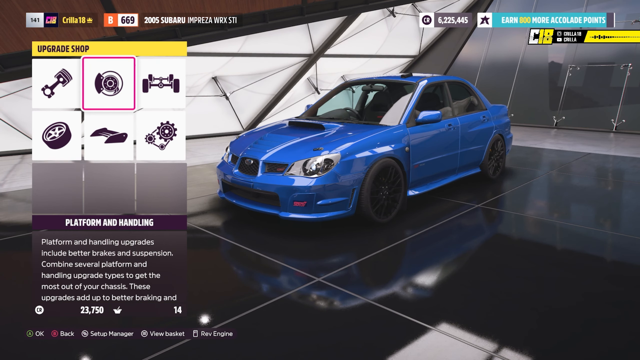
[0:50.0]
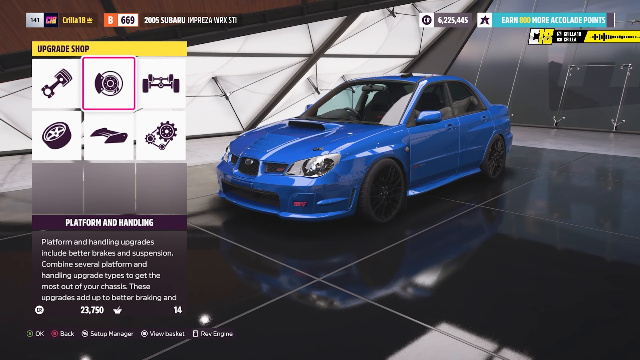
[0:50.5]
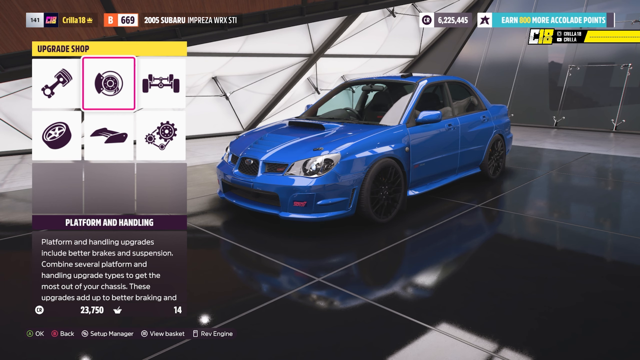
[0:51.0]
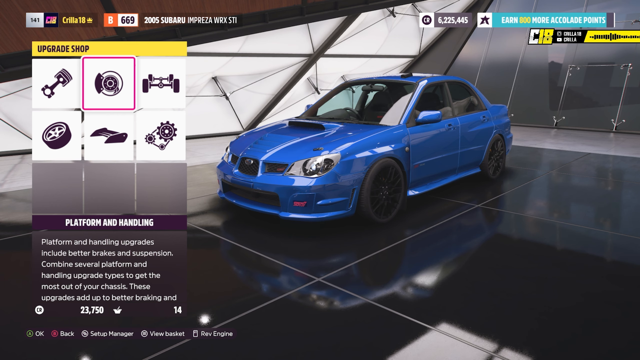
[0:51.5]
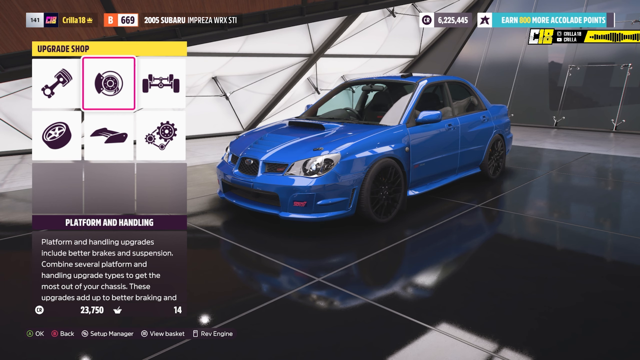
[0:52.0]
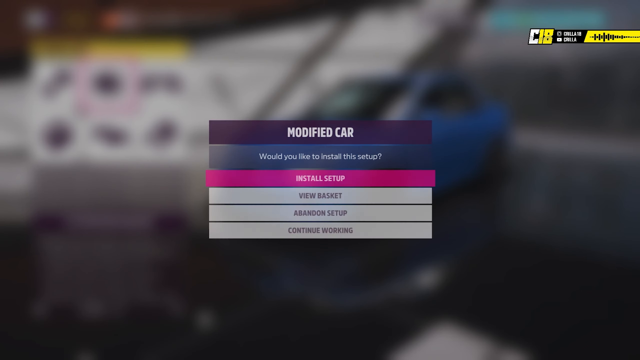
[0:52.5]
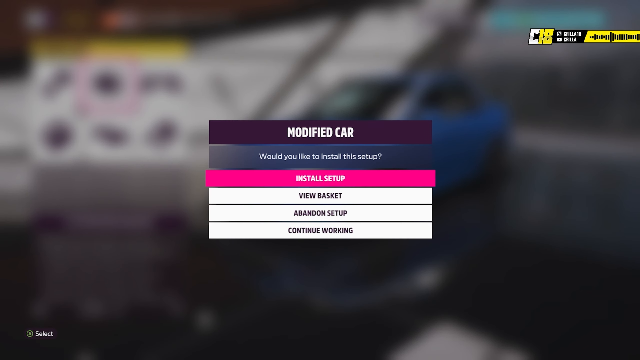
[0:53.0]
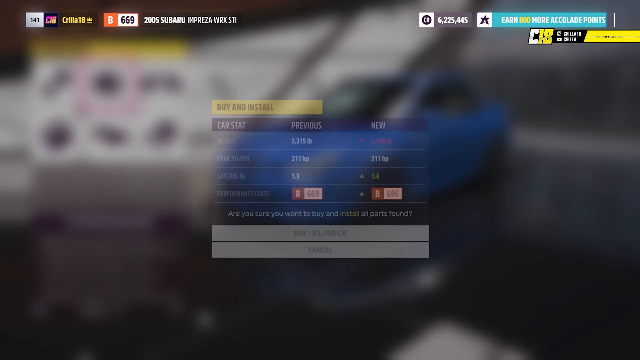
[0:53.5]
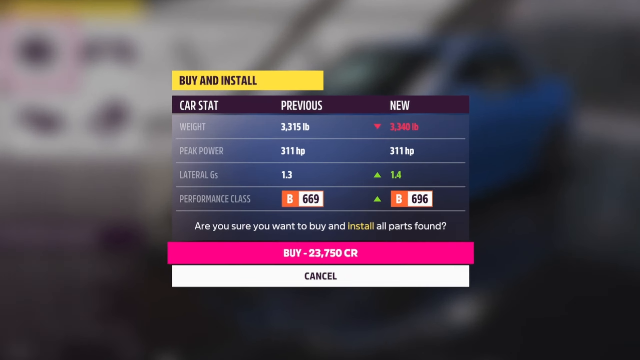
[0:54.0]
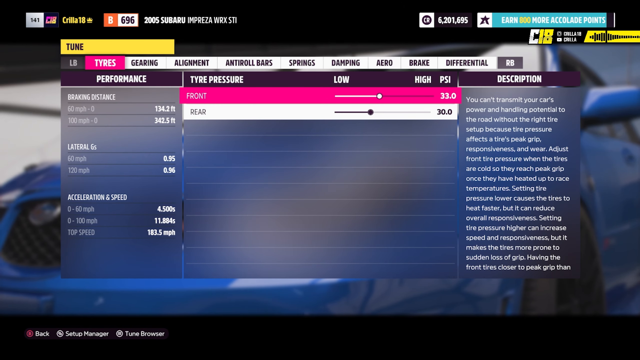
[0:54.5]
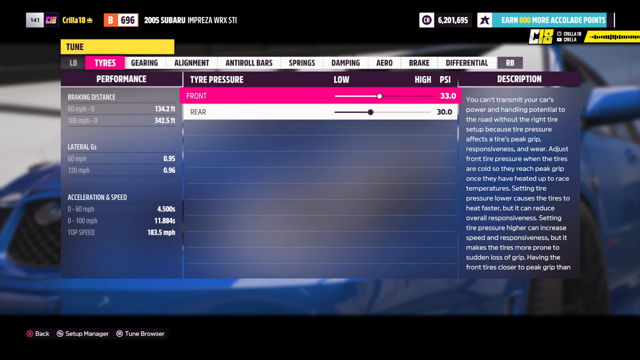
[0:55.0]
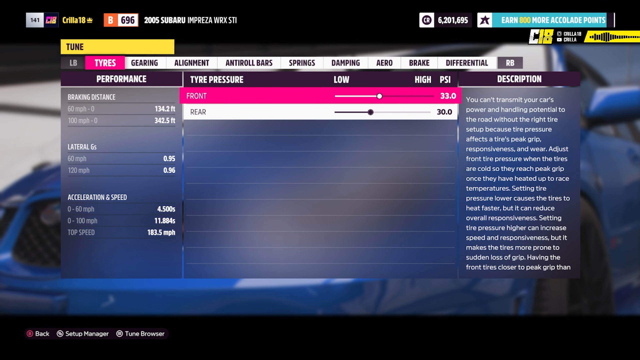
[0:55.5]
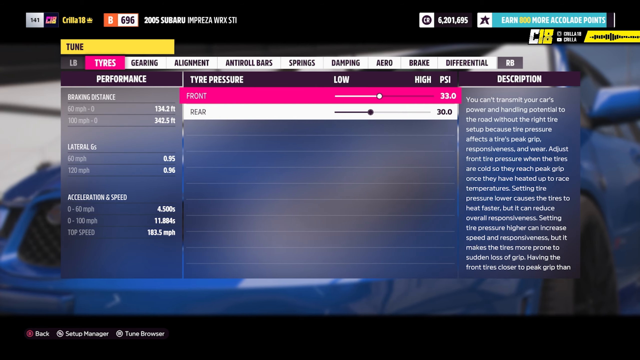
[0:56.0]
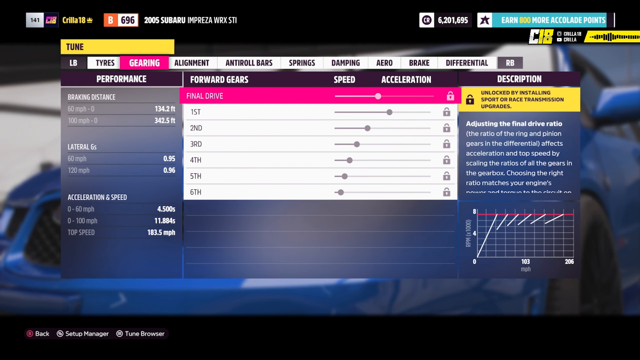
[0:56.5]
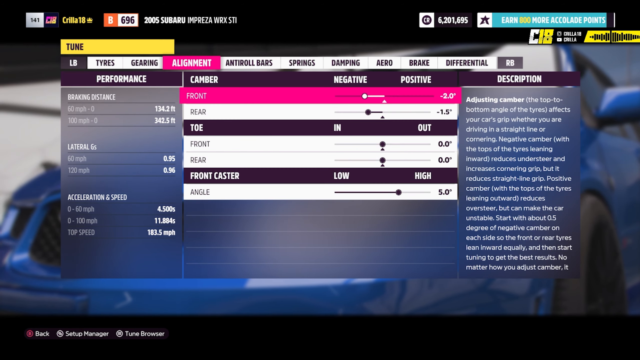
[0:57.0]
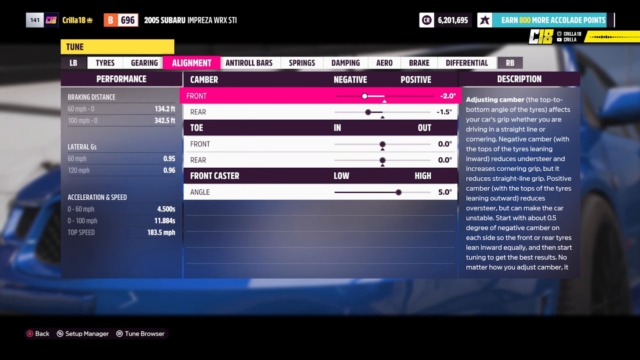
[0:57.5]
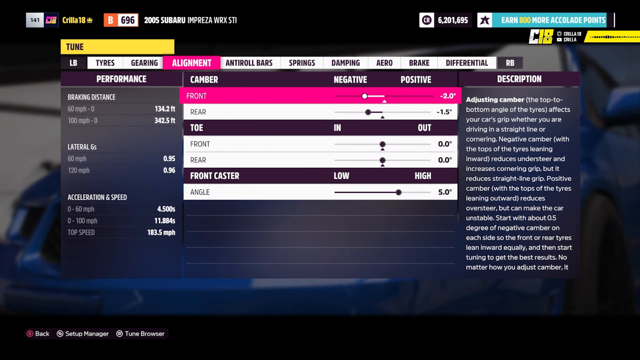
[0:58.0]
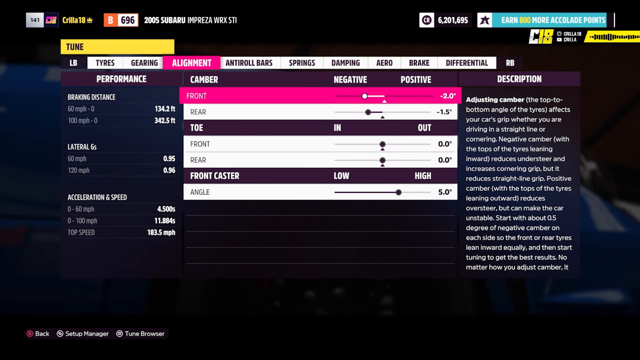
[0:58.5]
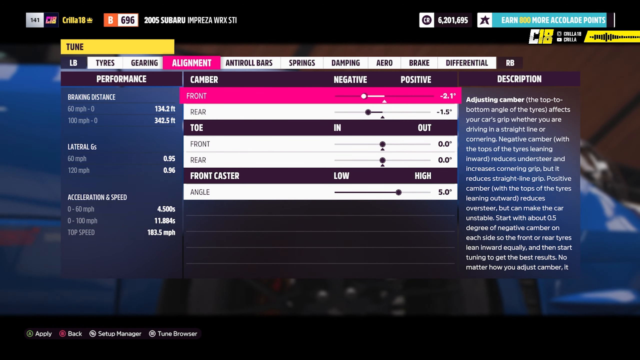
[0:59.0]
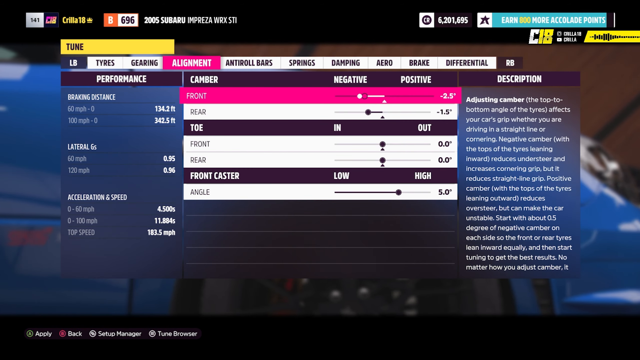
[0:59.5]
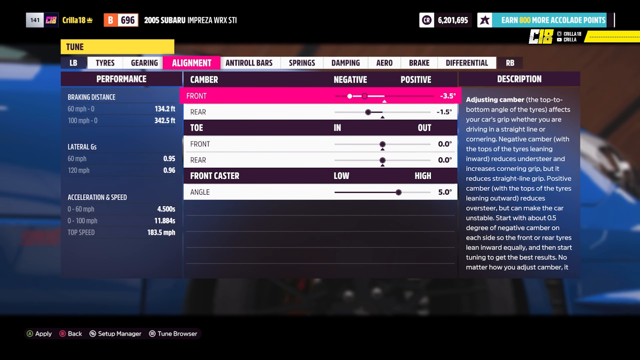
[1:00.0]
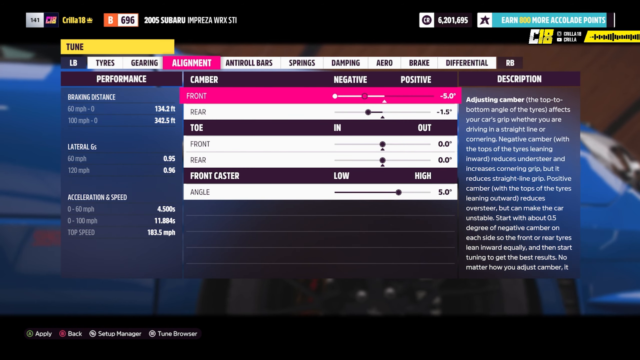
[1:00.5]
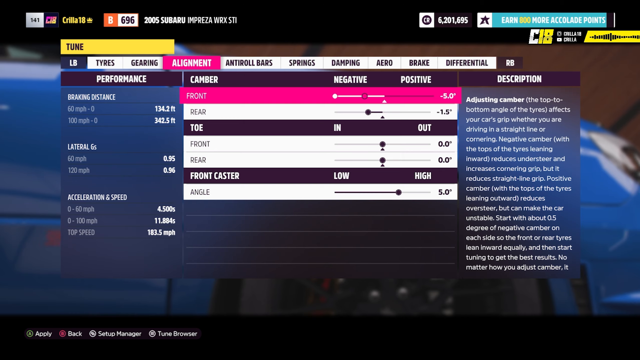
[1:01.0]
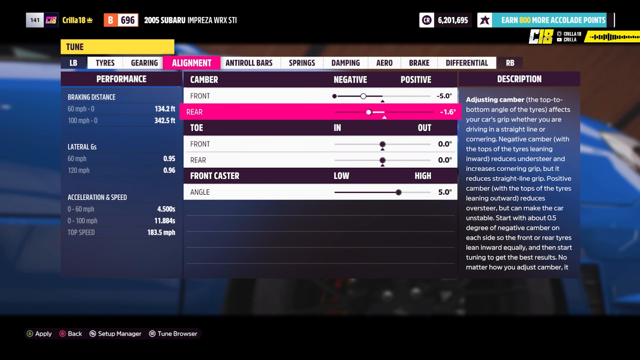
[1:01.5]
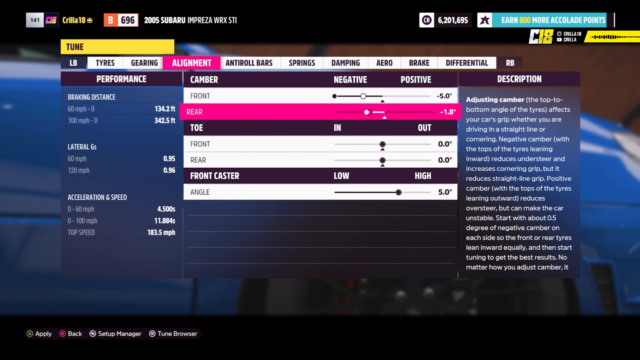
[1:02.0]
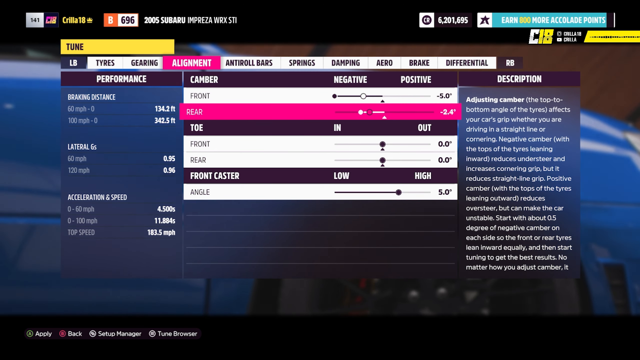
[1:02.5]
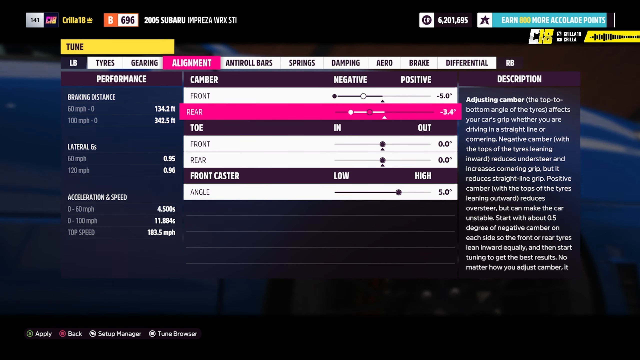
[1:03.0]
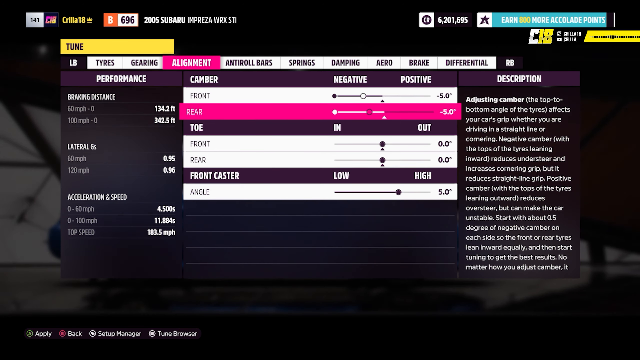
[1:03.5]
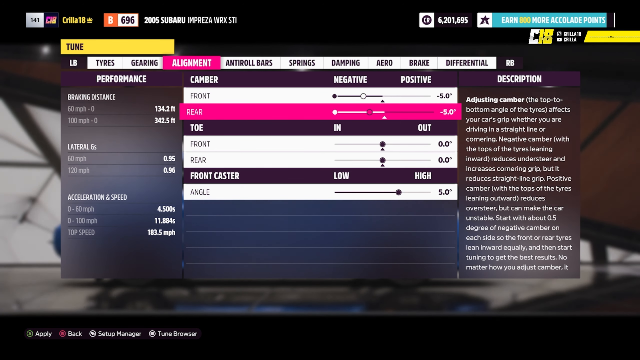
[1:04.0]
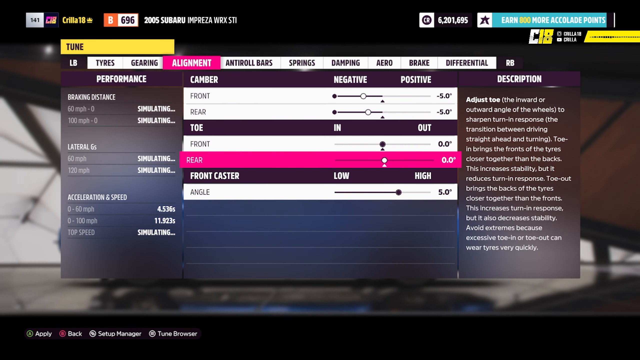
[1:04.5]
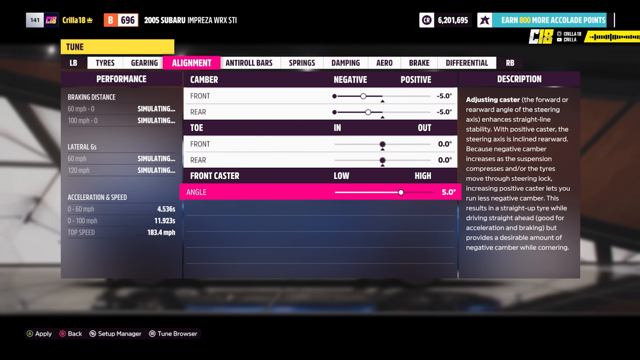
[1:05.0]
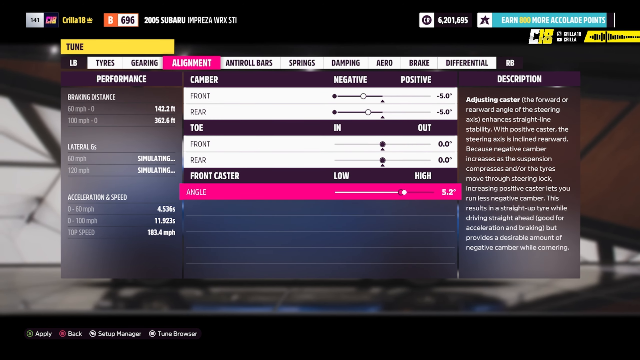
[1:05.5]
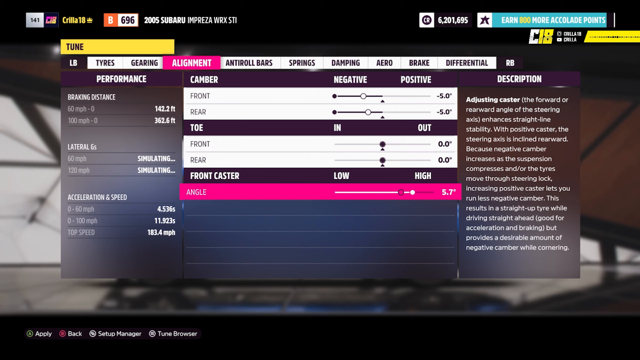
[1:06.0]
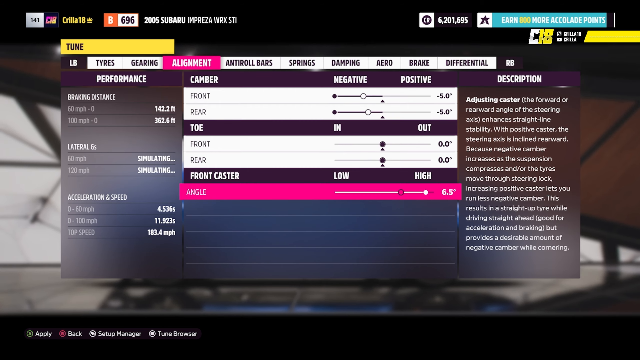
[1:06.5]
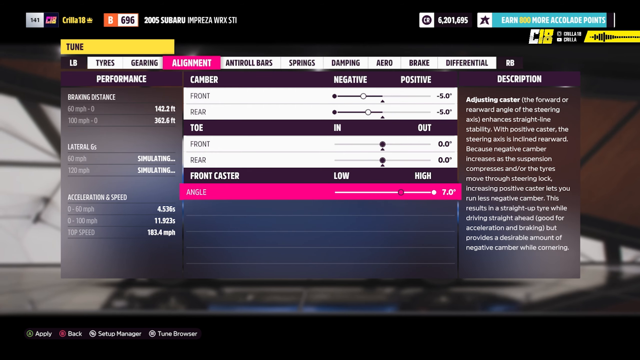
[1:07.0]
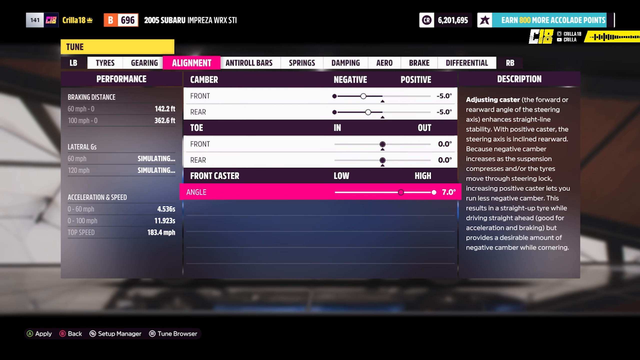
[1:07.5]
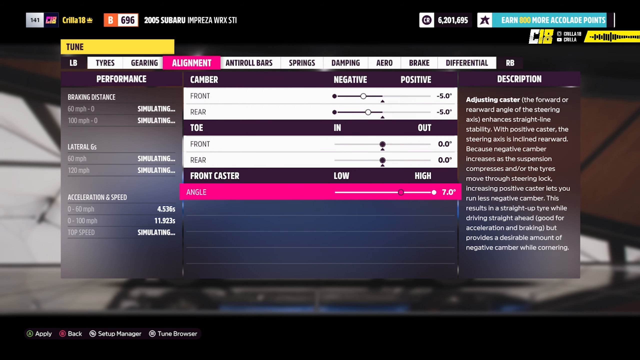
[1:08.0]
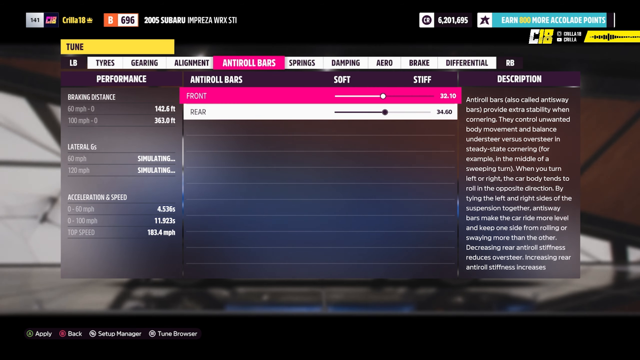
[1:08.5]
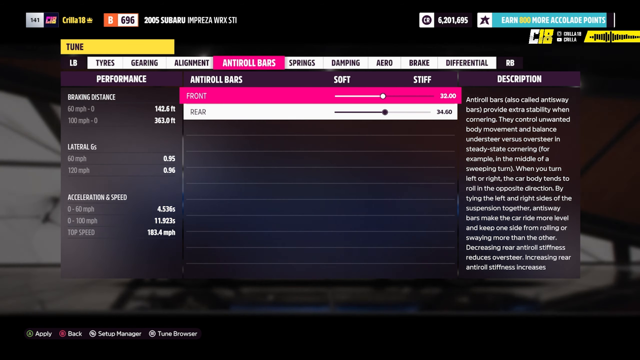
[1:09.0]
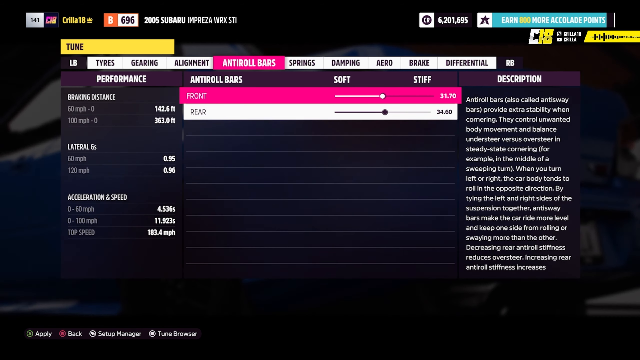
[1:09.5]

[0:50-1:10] The player looks at the modified car for a brief moment, then chooses to install the selected options. The game asks "would you like to install this setup", and the player immediately confirms and buys the needed parts. Next comes the tuning stage. In the alignment settings, the player reduces the front camber to the lowest number possible, and the rear camber as well, then moves down to the front caster and raises the angle to the highest option, 7 degrees. They then move to the anti-roll bars and begin reducing the value as the shot ends.